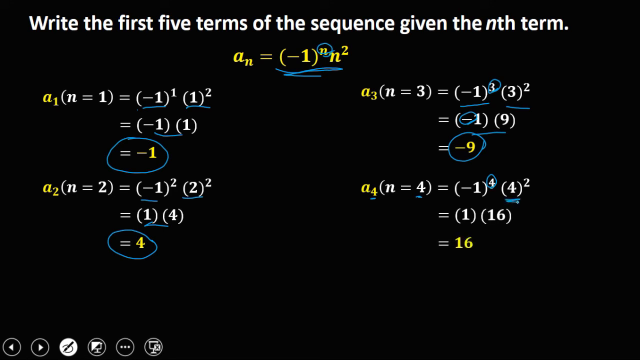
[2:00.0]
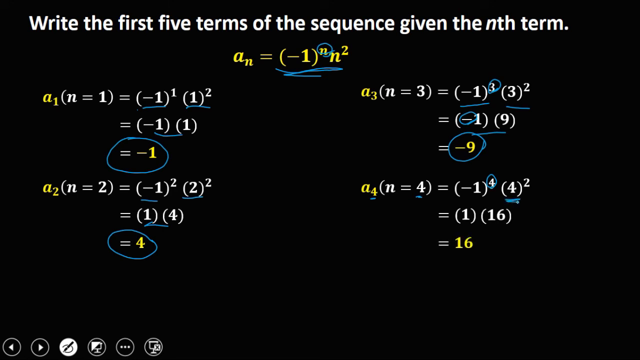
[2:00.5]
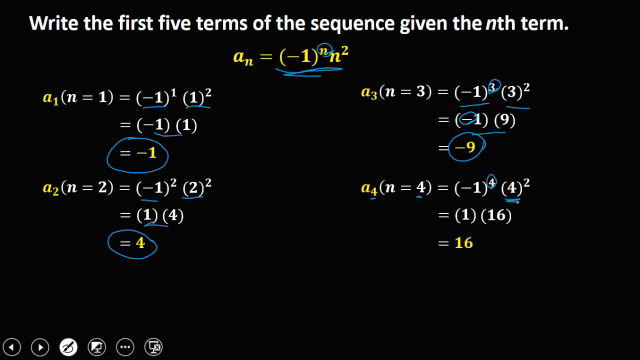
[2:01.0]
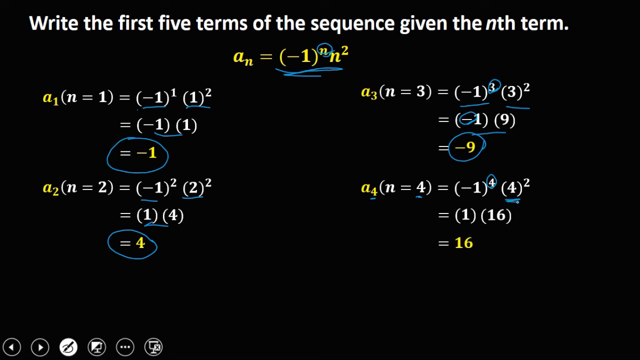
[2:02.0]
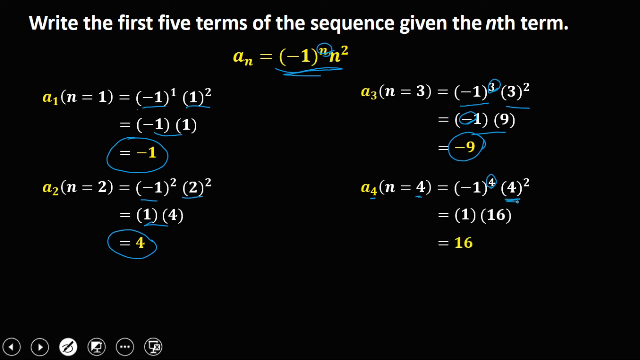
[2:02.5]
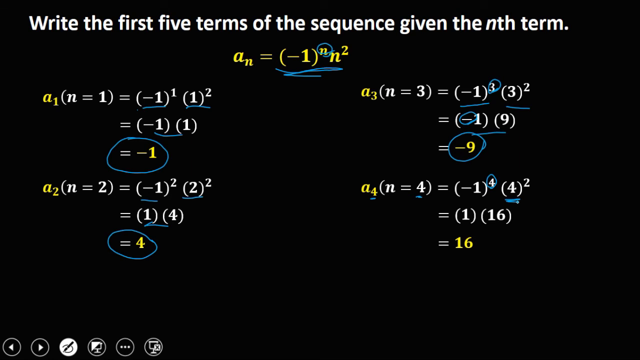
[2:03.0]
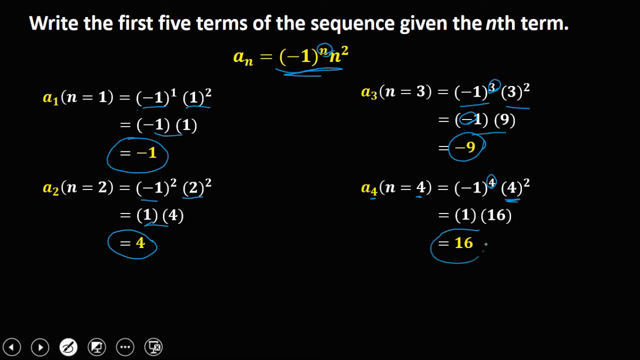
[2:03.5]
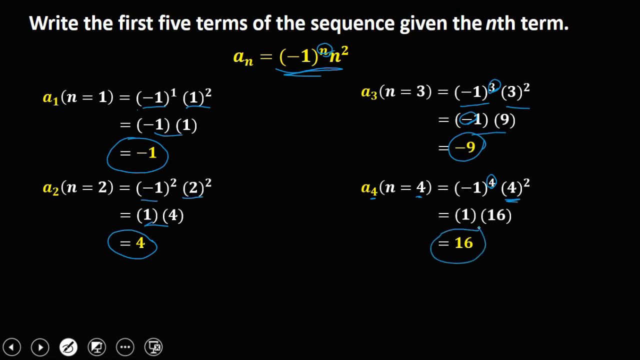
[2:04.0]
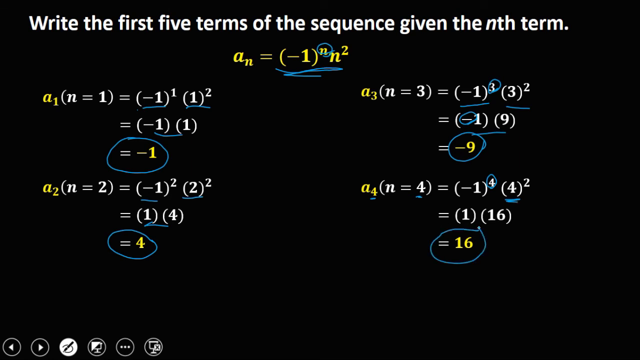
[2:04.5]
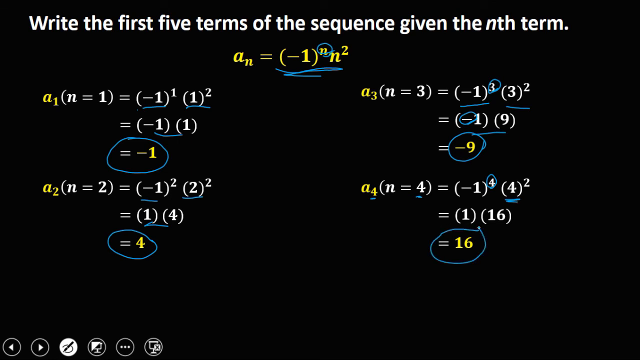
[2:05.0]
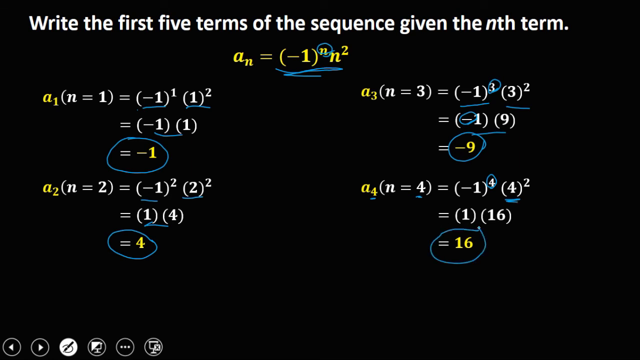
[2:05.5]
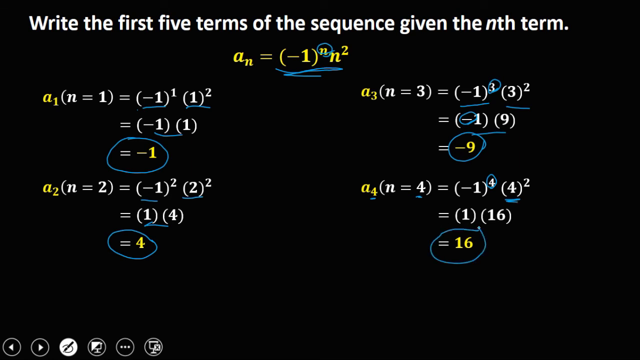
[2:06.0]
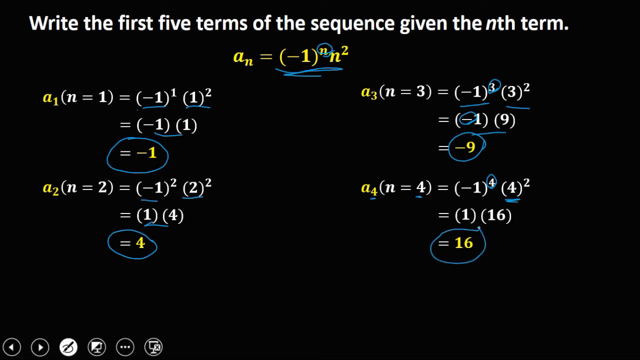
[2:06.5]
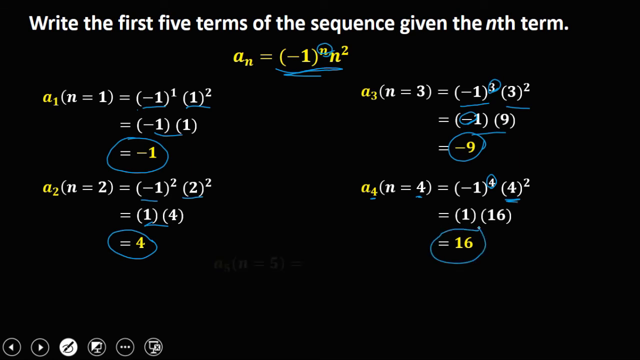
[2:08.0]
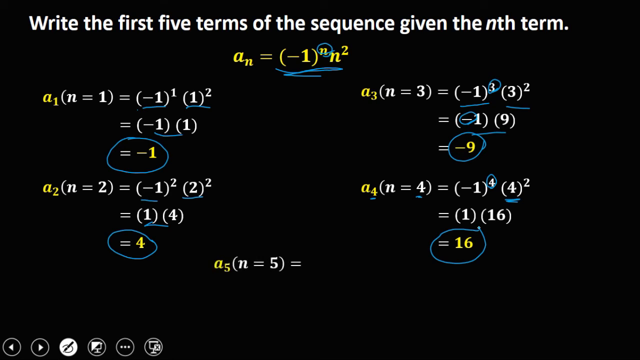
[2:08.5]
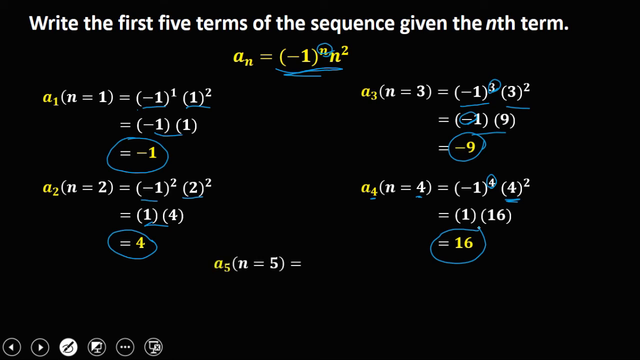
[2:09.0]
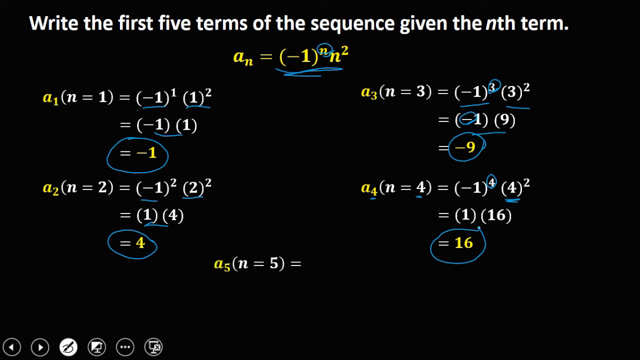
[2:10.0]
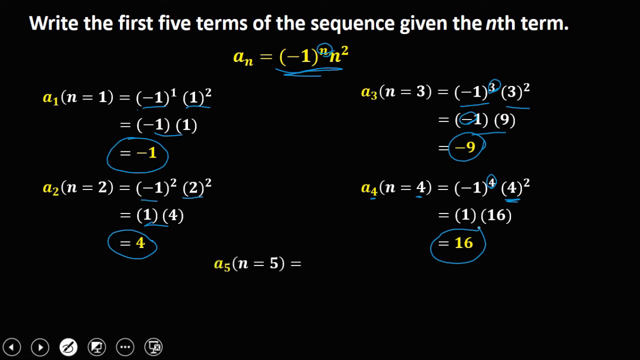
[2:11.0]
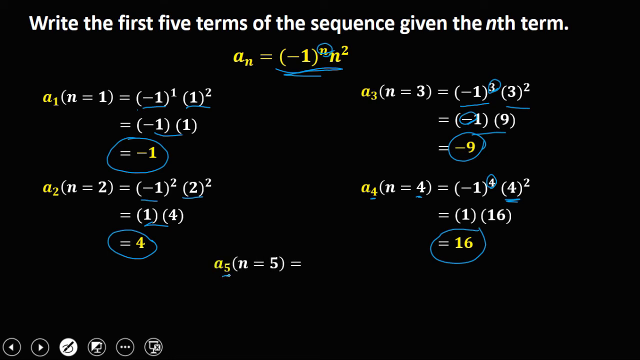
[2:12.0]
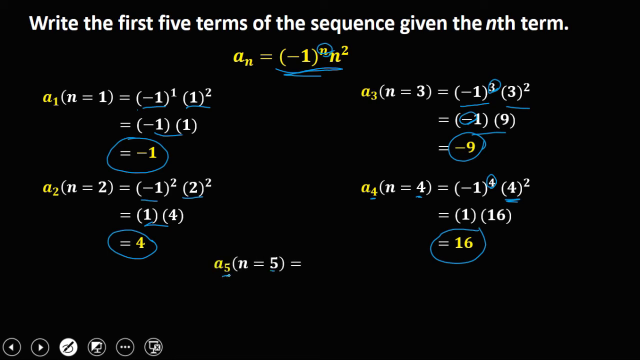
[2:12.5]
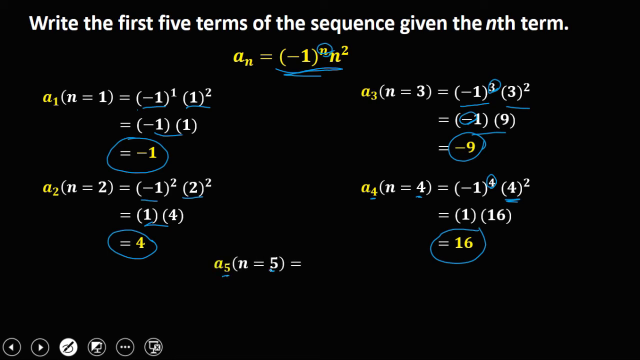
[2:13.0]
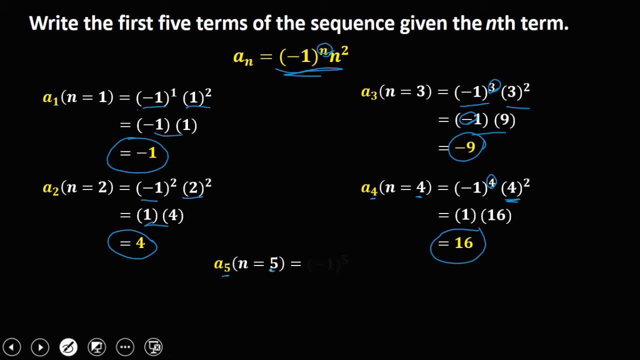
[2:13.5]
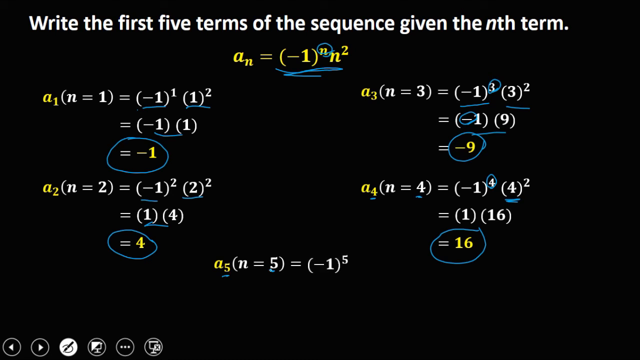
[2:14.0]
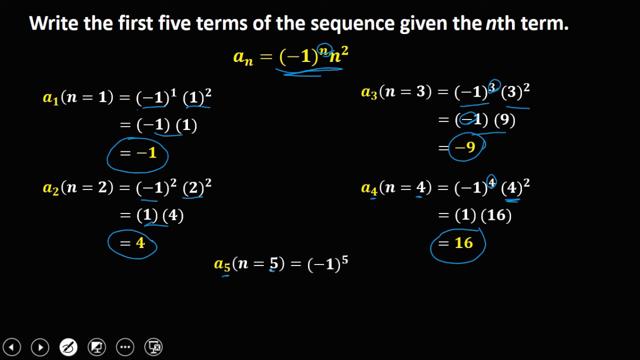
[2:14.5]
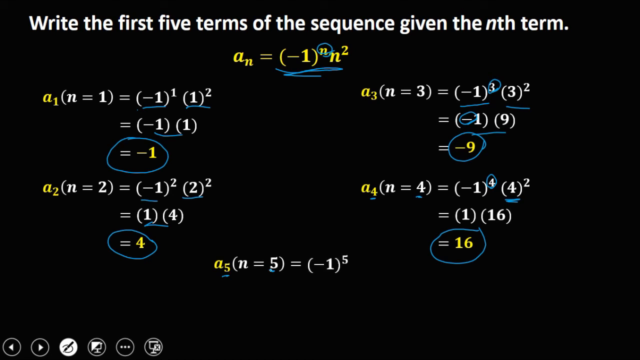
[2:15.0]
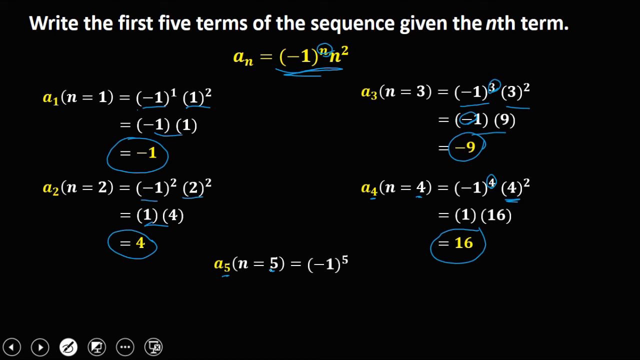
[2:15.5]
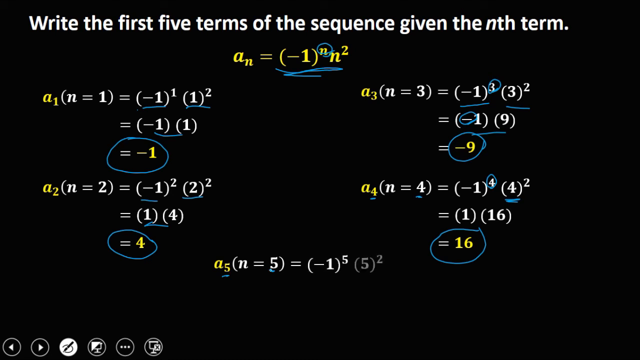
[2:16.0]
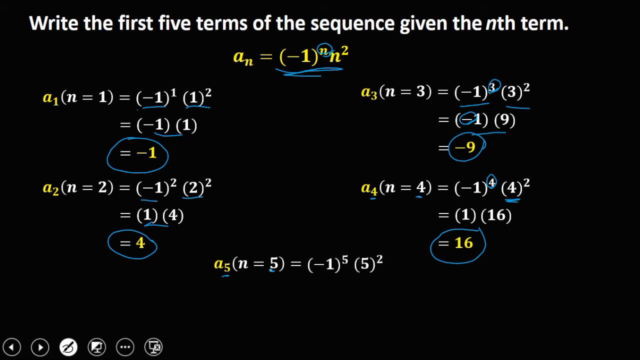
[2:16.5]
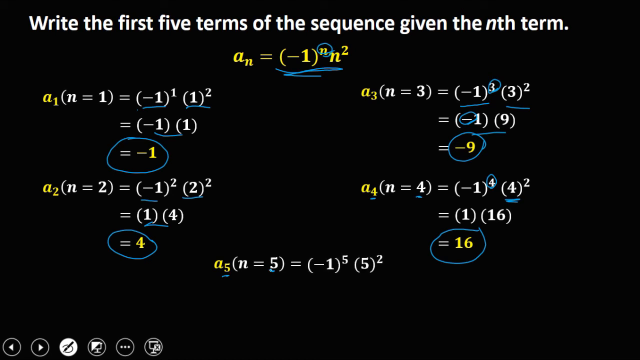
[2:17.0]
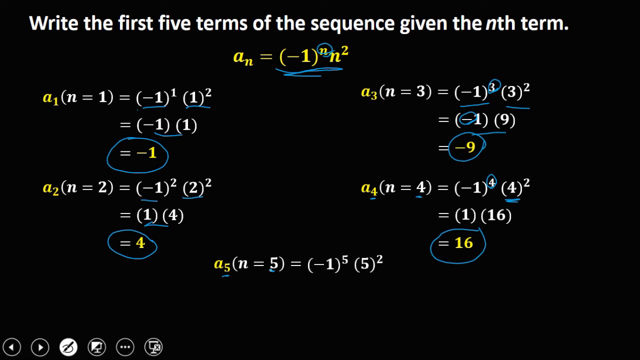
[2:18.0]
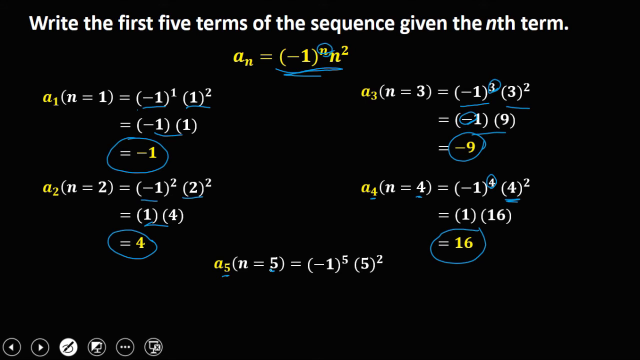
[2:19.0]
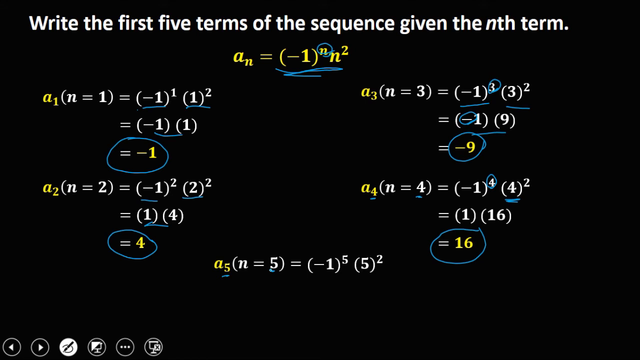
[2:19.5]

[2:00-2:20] The tutorial solves for the fifth and last term, a subscript 5 (n = 5), which equals negative one to the fifth power multiplied by five squared. Negative one to an odd power remains negative one, and five squared is 25, so negative one multiplied by 25 equals negative 25.